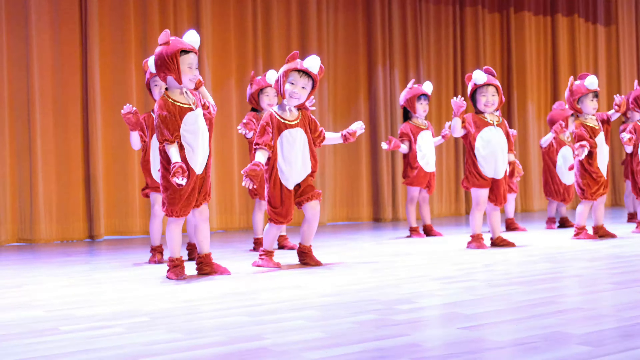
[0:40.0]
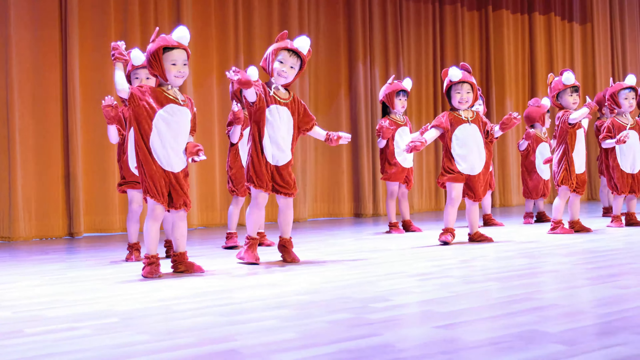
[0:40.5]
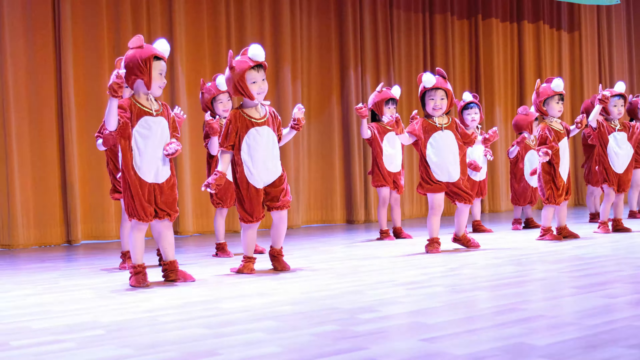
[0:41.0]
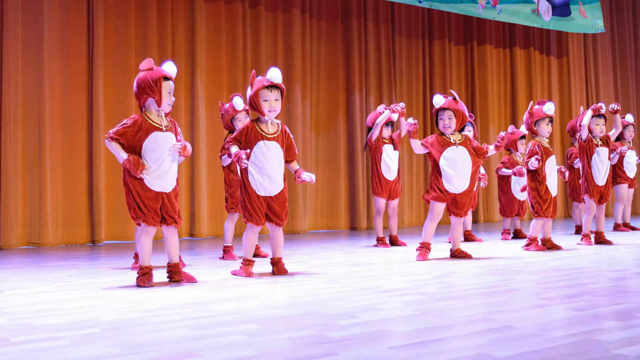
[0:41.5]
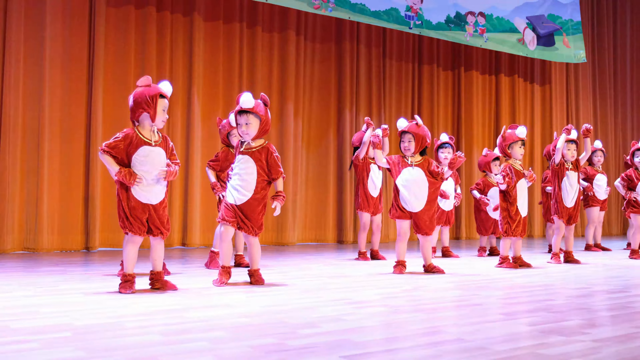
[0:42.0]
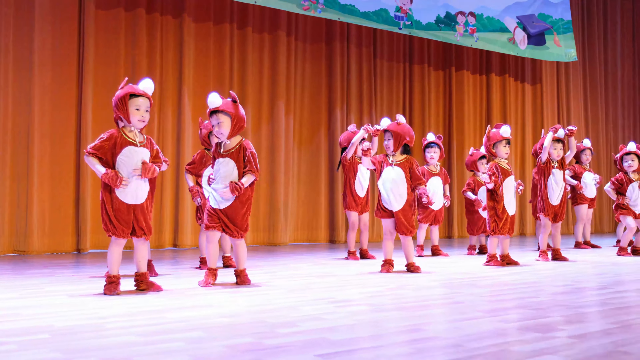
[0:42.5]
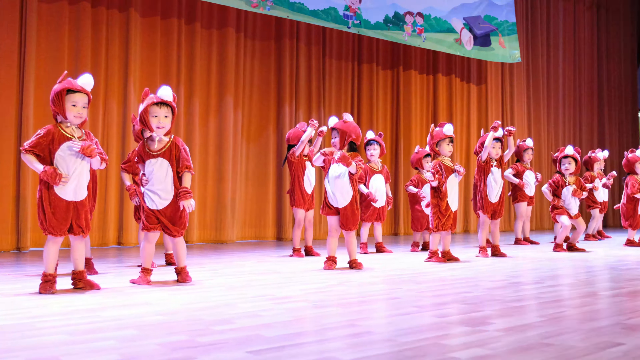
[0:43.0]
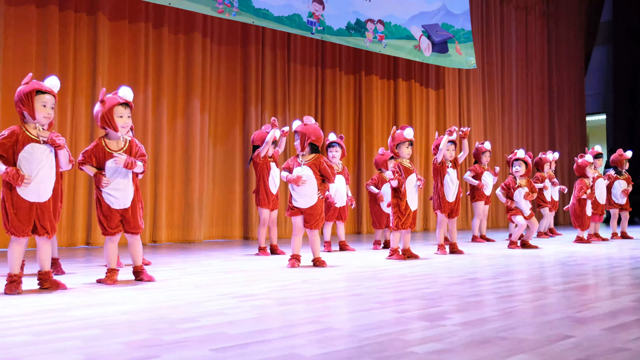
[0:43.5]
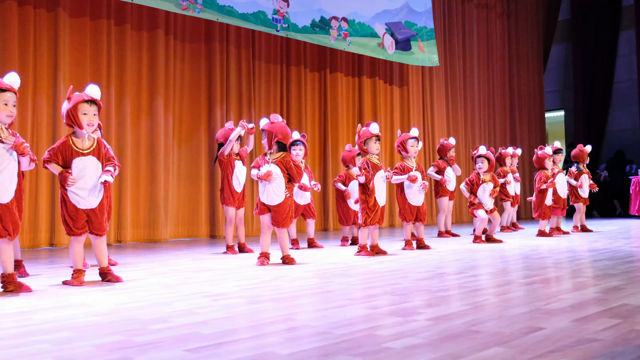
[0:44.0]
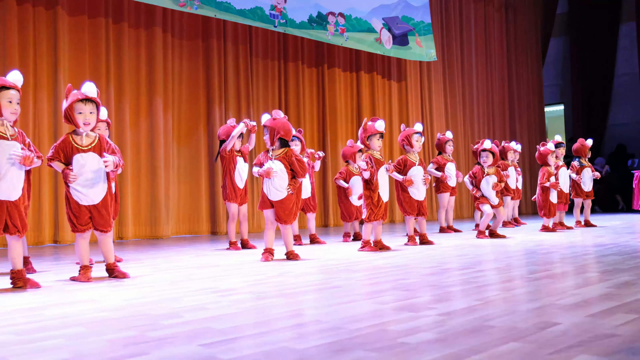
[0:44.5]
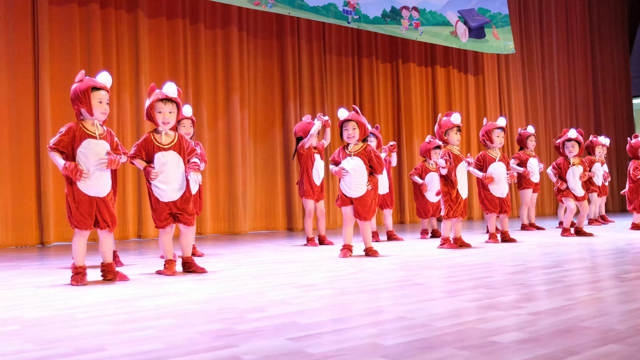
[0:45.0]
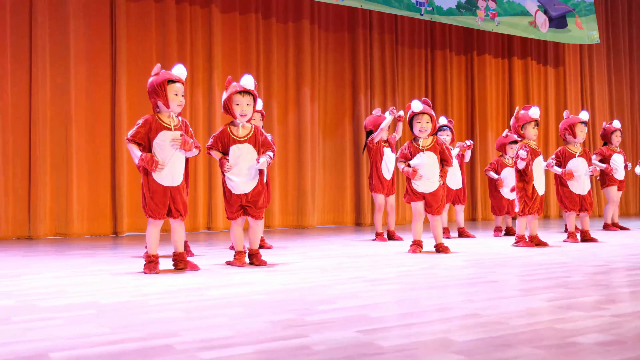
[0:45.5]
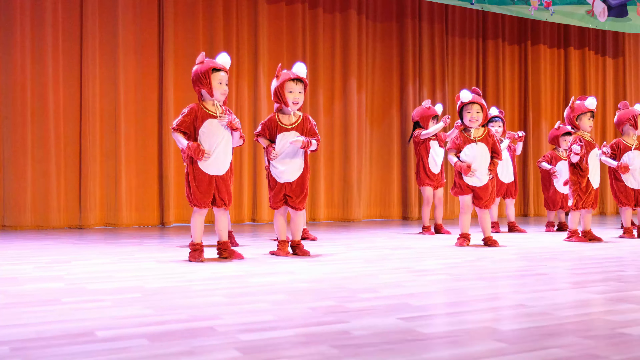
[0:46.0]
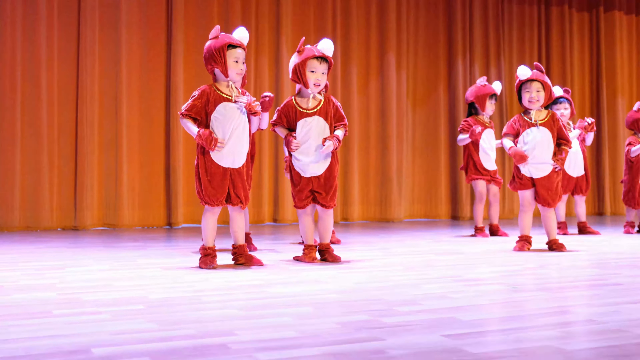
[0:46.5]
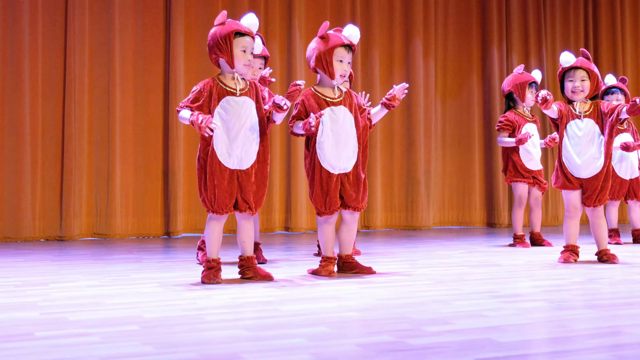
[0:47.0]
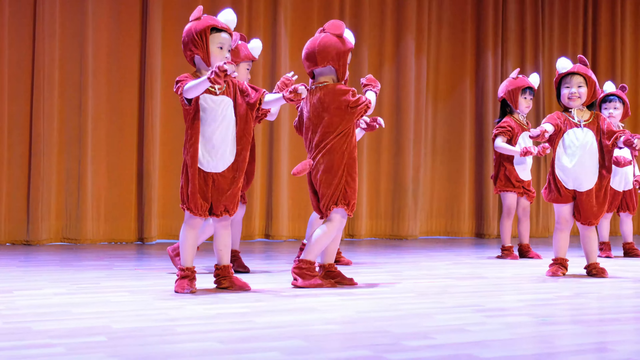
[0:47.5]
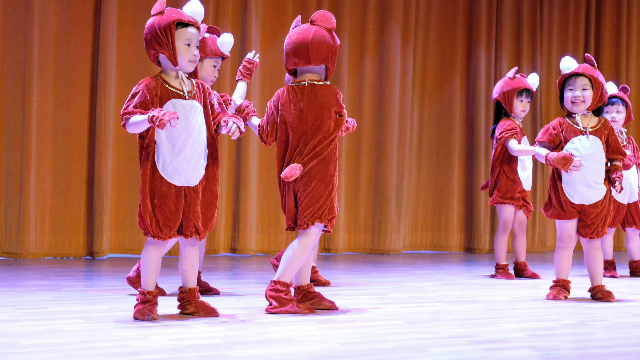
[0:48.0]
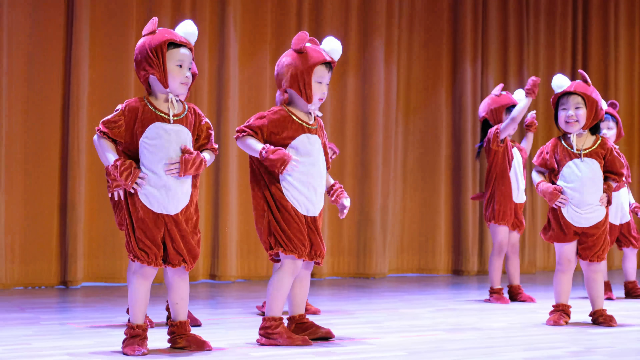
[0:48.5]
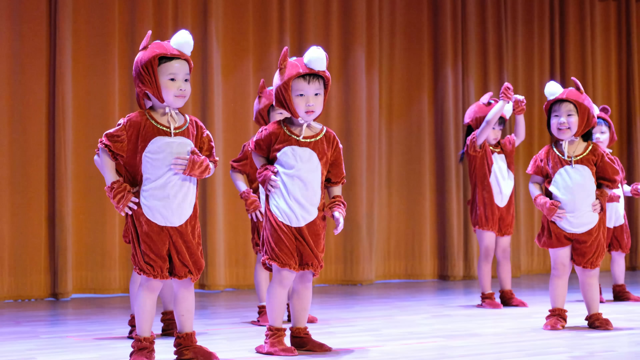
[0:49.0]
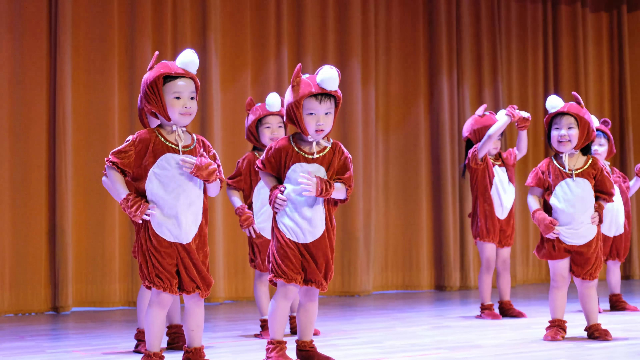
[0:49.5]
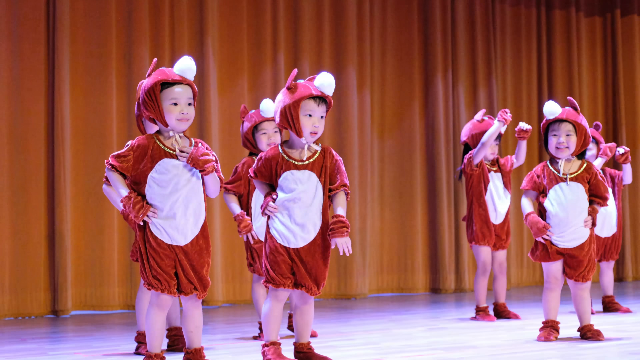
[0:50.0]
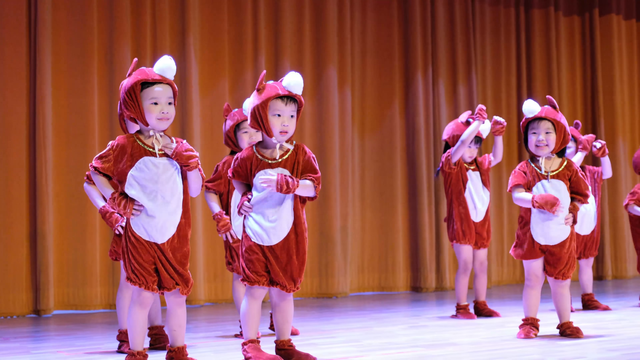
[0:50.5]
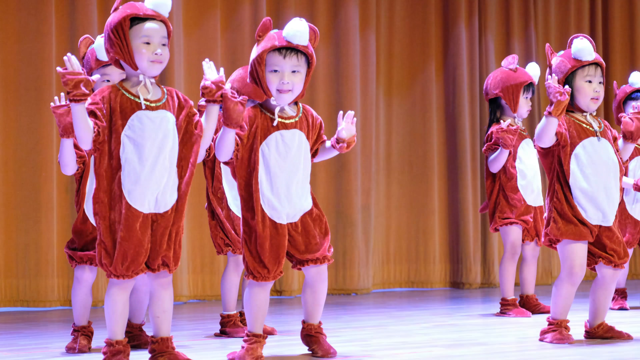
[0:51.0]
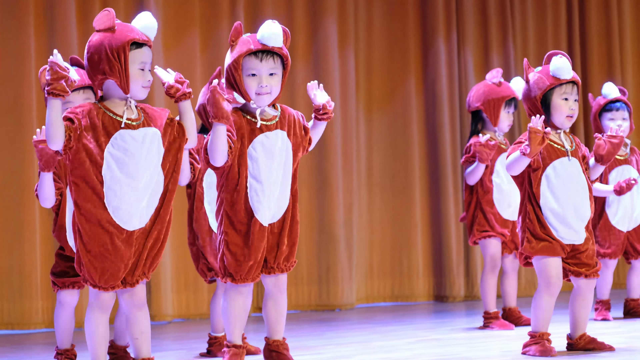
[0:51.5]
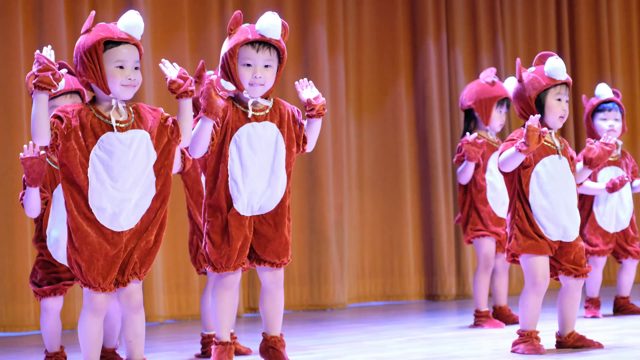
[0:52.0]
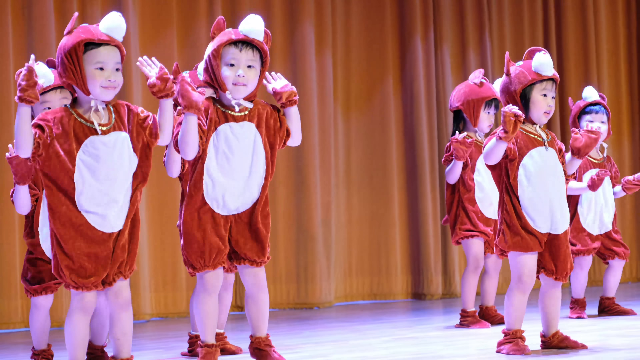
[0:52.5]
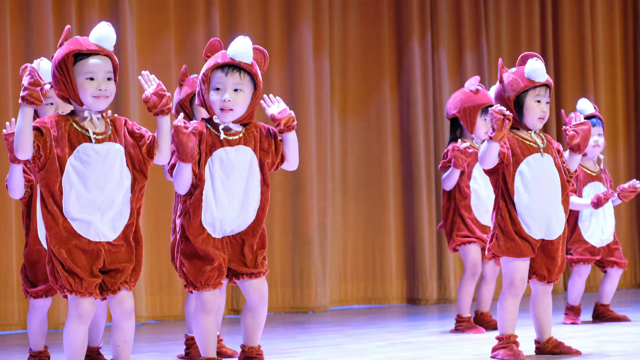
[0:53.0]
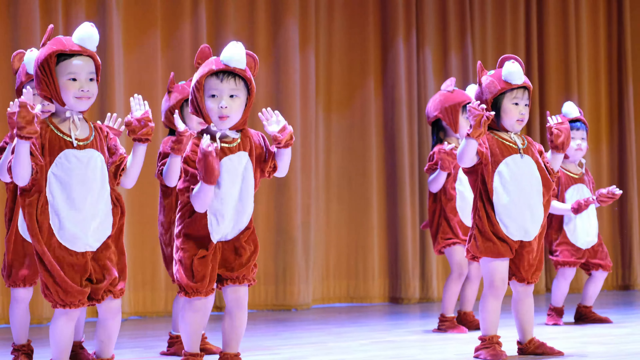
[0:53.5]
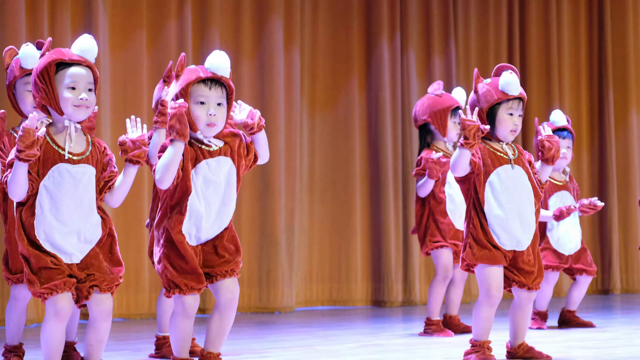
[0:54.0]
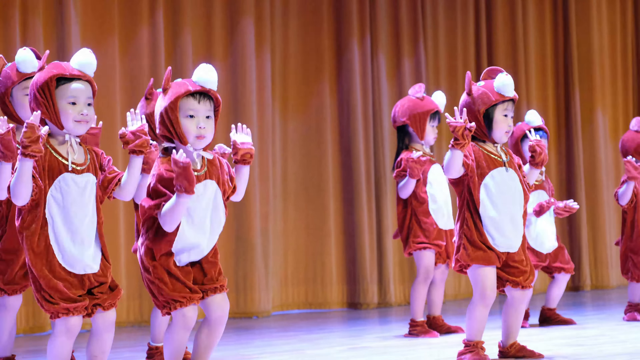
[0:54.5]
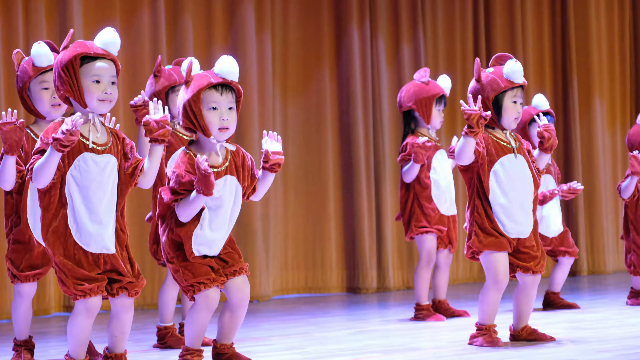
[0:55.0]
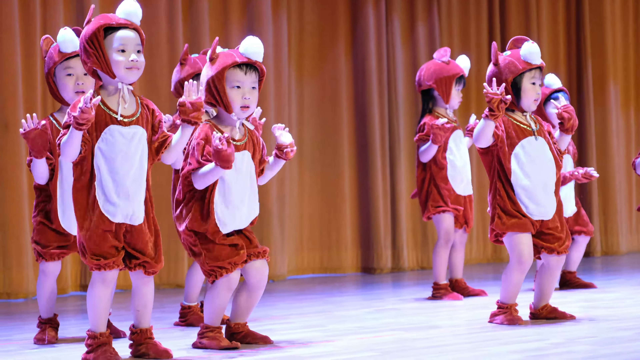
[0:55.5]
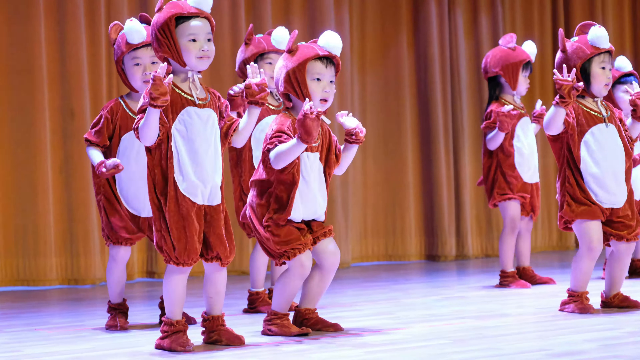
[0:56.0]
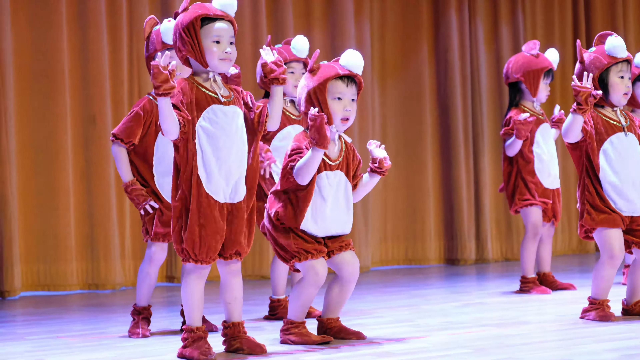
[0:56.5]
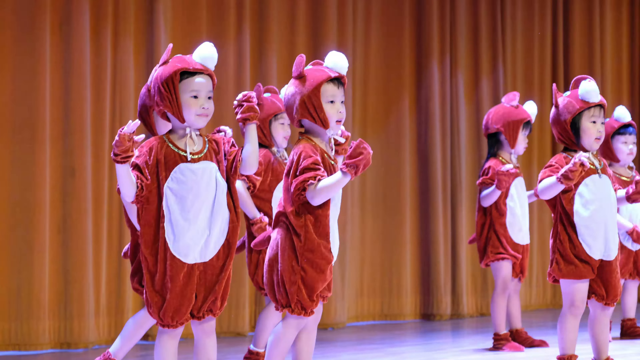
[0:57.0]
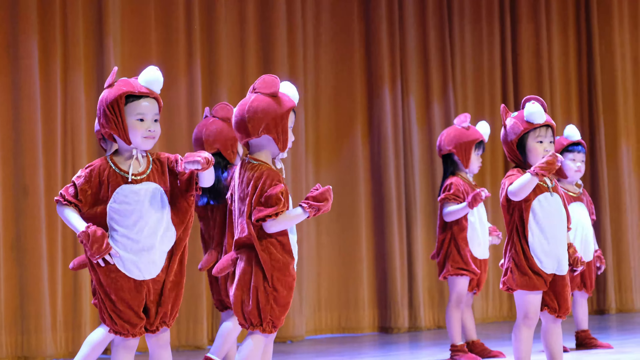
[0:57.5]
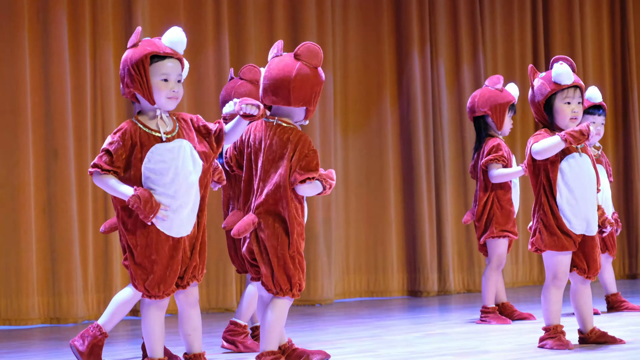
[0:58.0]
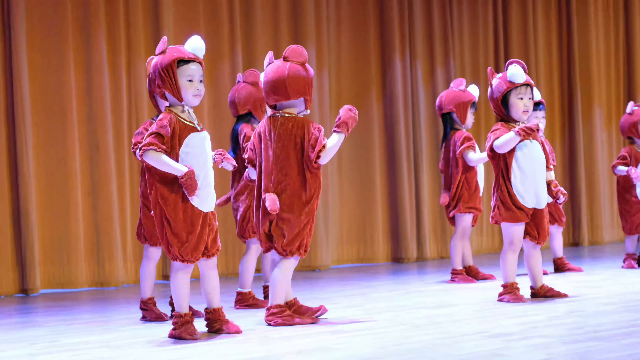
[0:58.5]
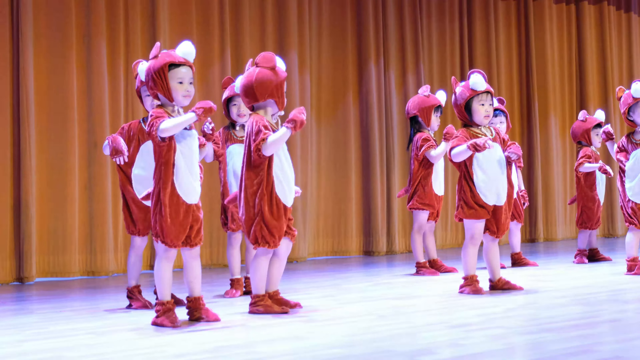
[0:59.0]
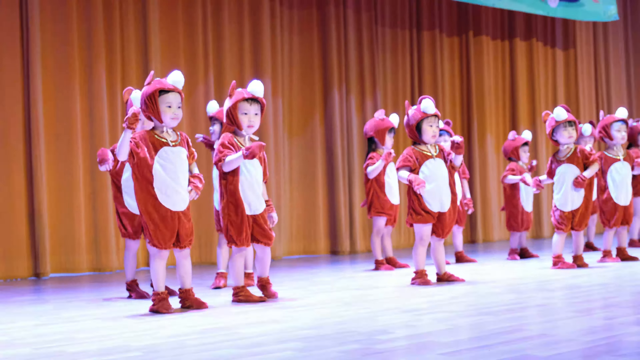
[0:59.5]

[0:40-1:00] Still in their red and white dinosaur costumes, the kids continue their dance routine on the stage as the choreography shifts. Some of them appear to do a squat dance, bending their knees and bouncing low to the ground with their hands up. A few wave their hands side to side in front of them, almost like windshield wipers, and some start patting their chest as a rhythm move. They all seem to be trying to keep up with the squatting and bouncing. Toward the end, they go back to flicking their wrists, apparently a repeating move in the dance, though not all of them are perfectly in sync.